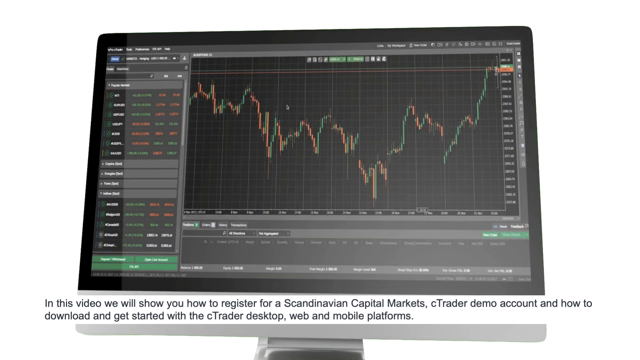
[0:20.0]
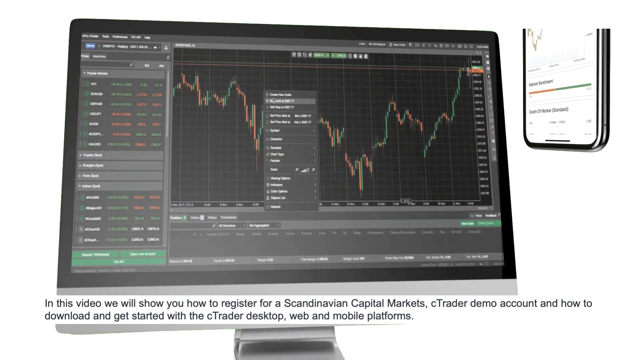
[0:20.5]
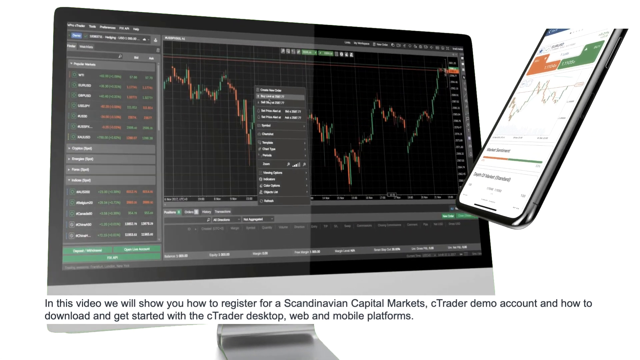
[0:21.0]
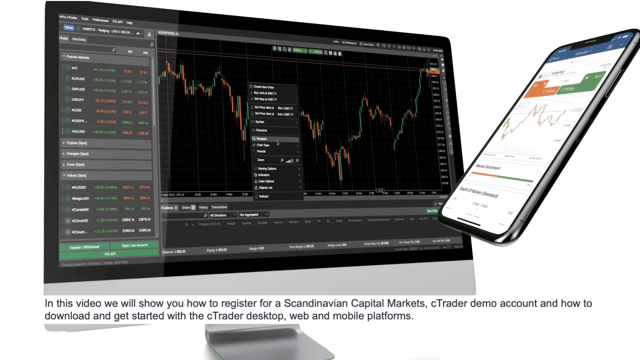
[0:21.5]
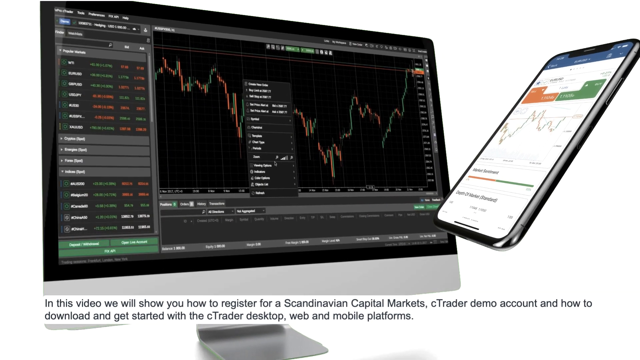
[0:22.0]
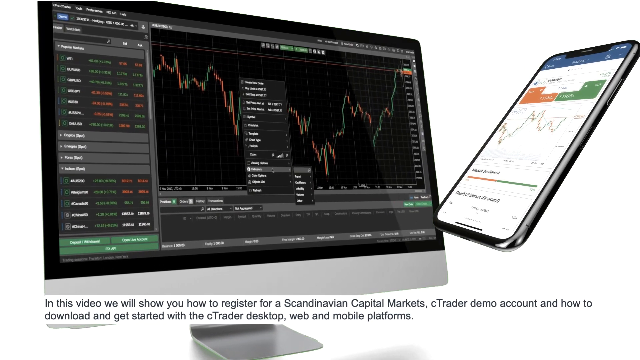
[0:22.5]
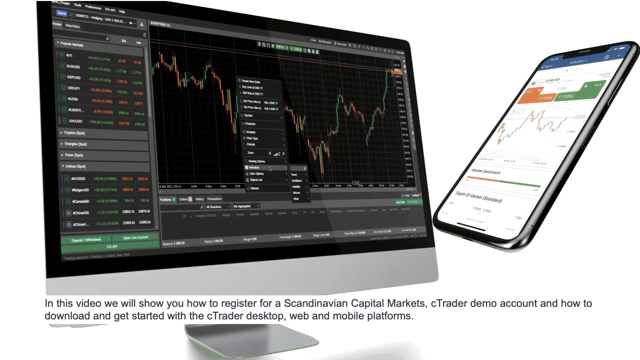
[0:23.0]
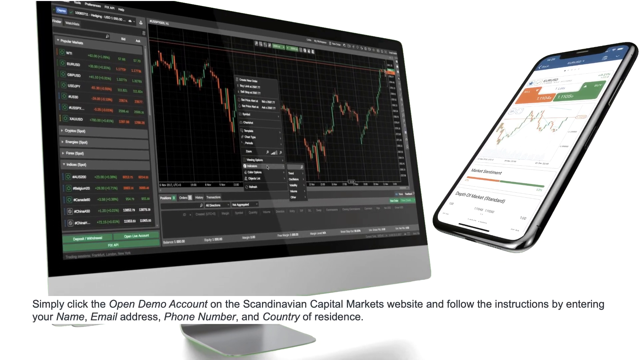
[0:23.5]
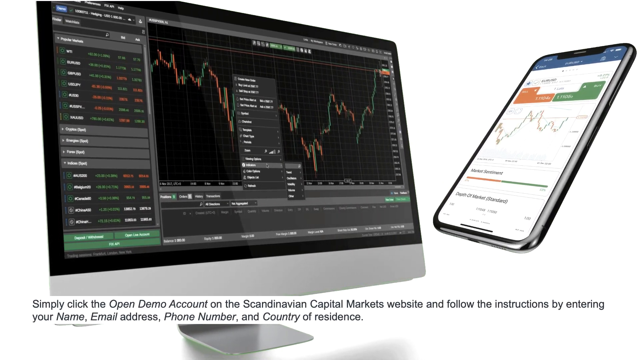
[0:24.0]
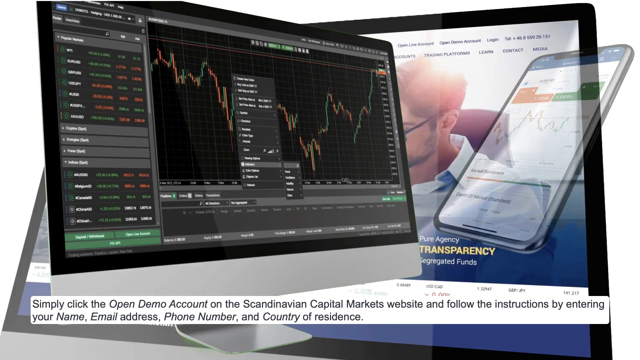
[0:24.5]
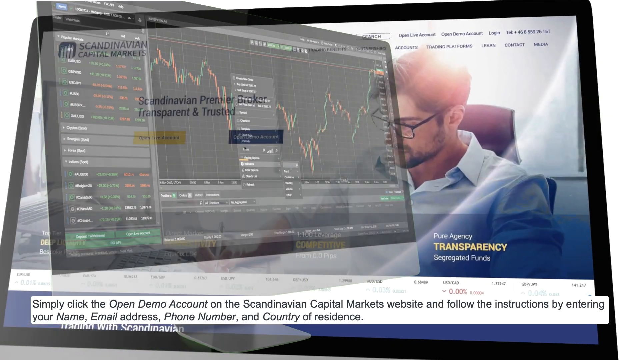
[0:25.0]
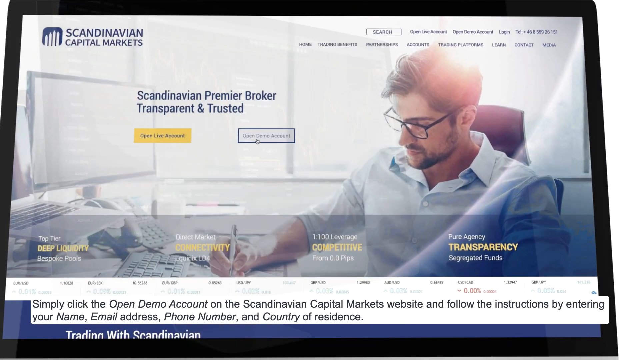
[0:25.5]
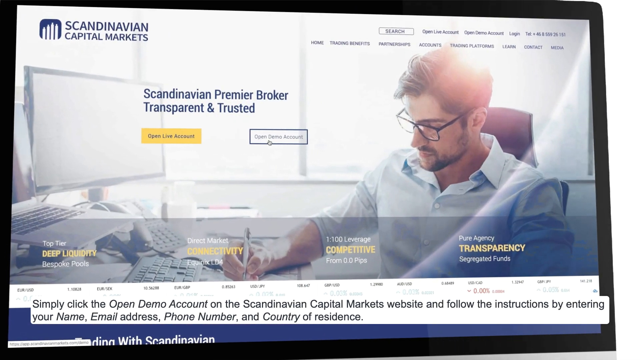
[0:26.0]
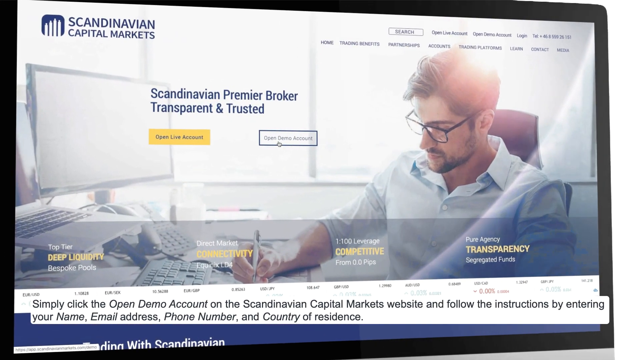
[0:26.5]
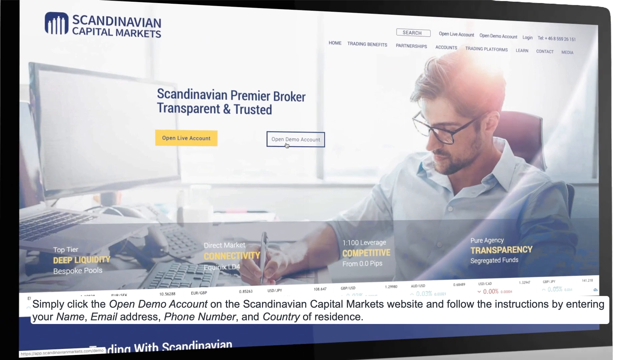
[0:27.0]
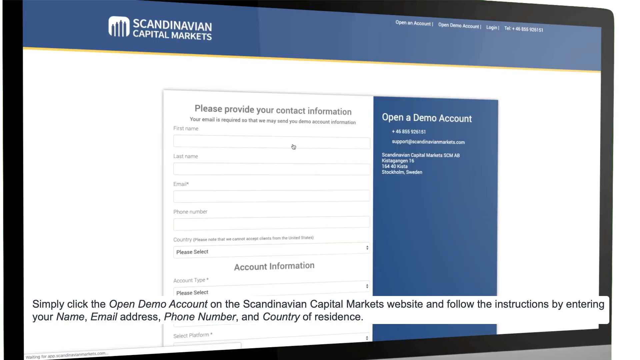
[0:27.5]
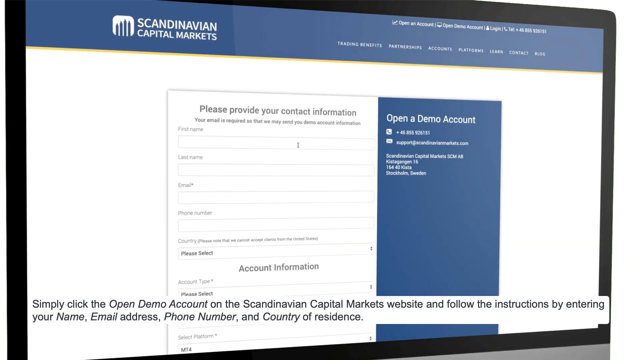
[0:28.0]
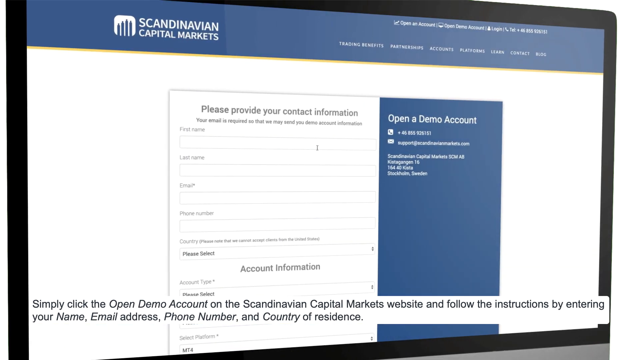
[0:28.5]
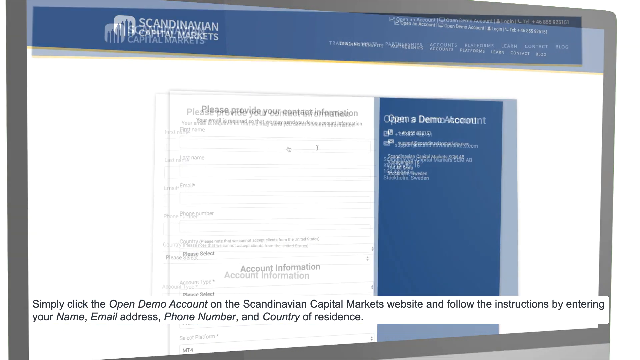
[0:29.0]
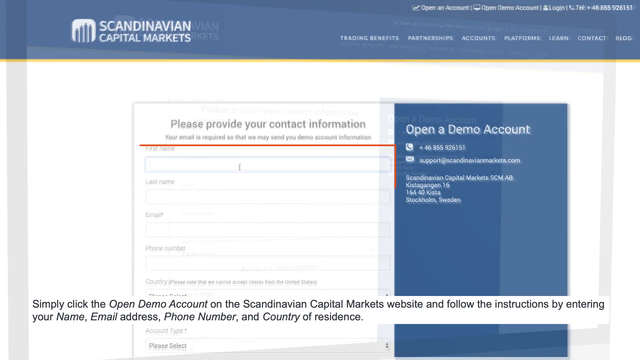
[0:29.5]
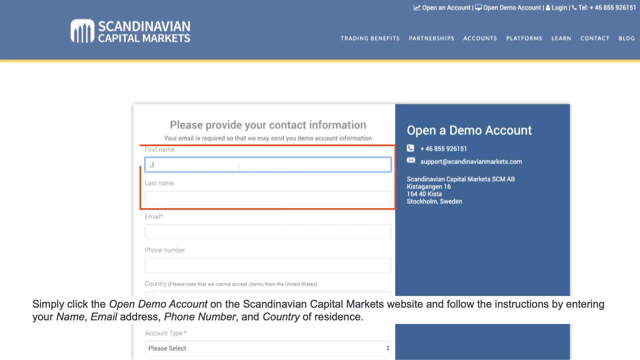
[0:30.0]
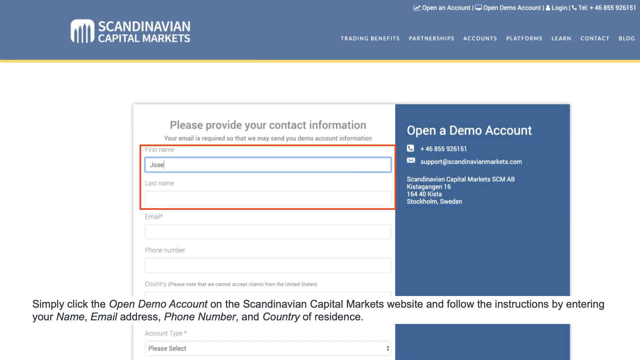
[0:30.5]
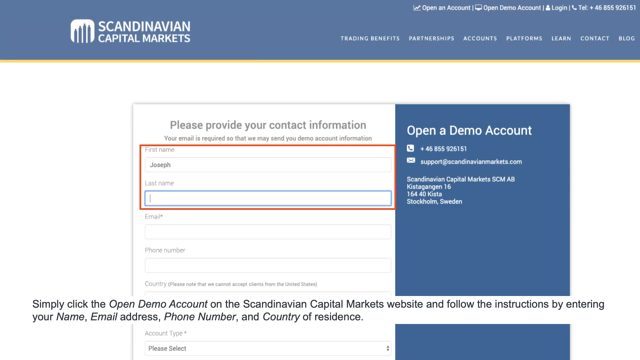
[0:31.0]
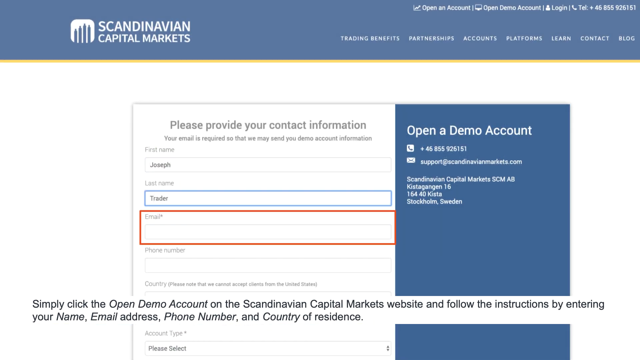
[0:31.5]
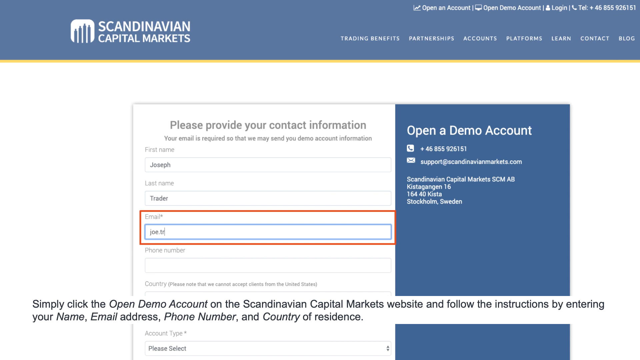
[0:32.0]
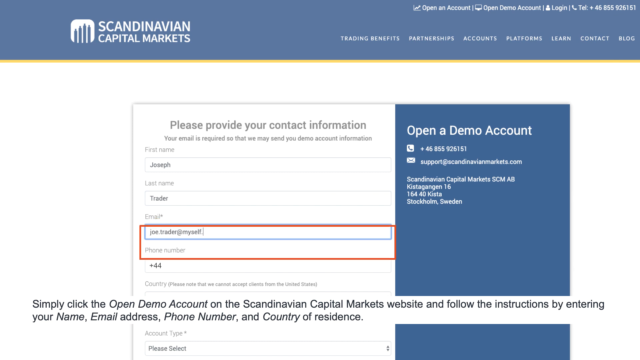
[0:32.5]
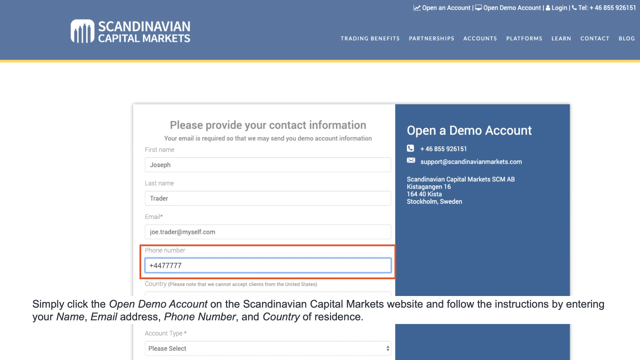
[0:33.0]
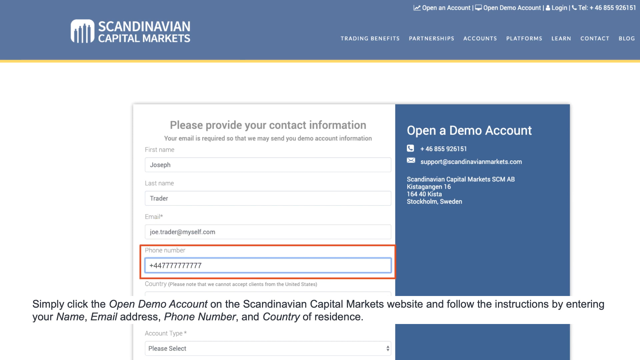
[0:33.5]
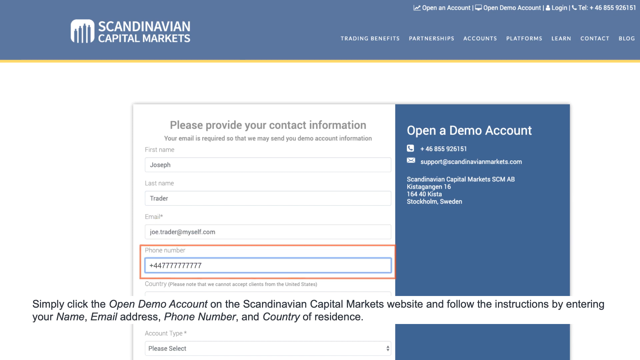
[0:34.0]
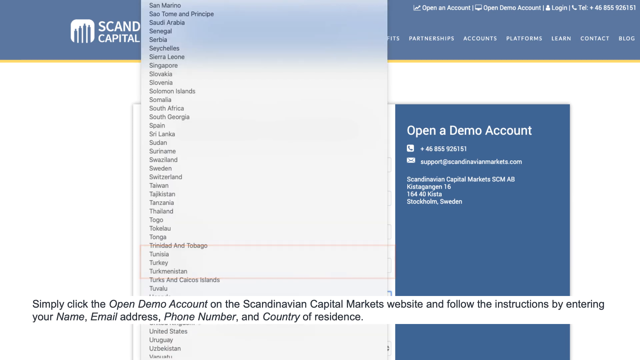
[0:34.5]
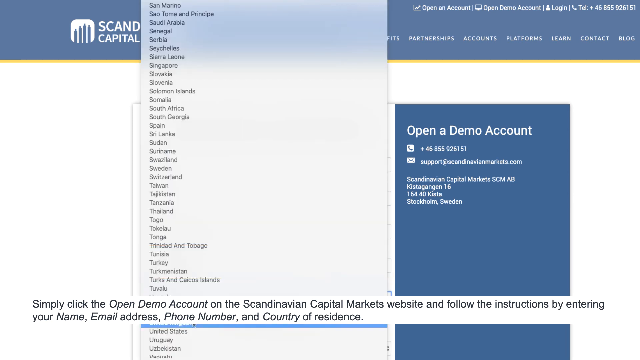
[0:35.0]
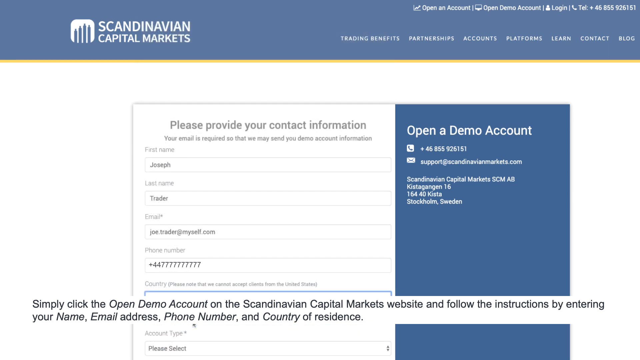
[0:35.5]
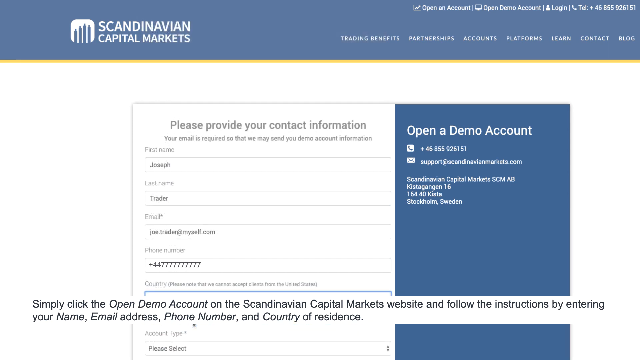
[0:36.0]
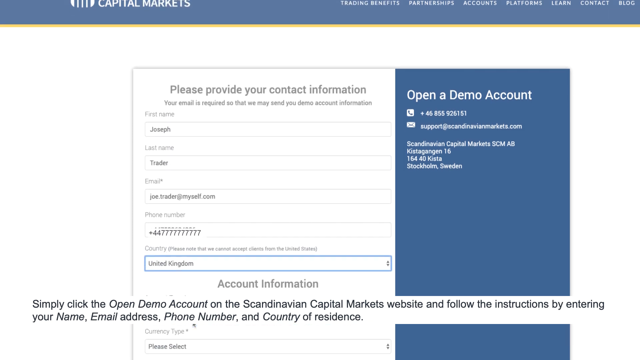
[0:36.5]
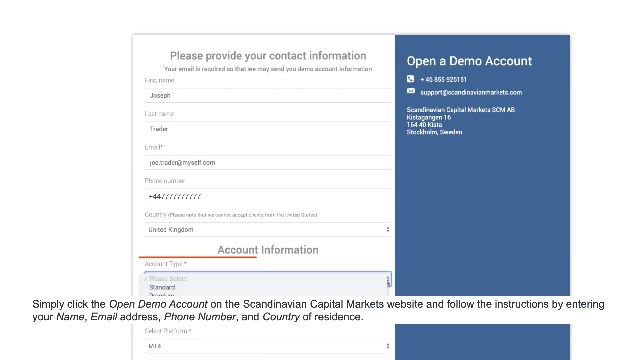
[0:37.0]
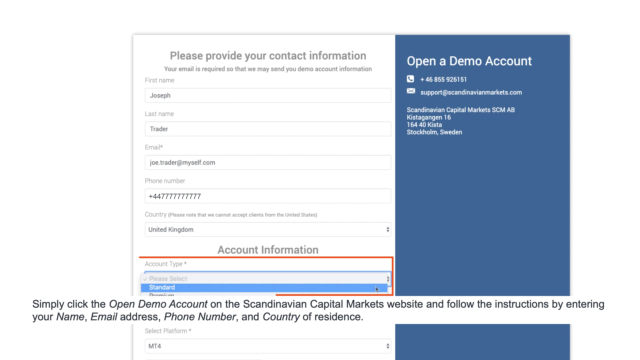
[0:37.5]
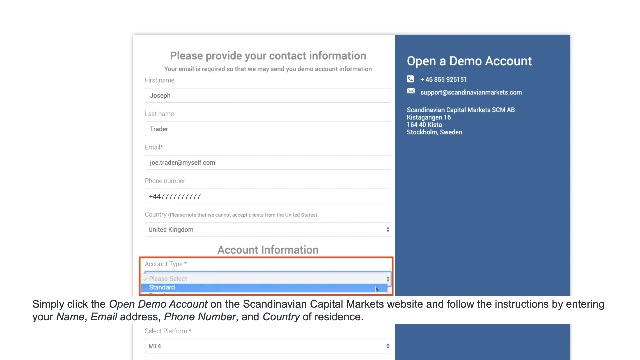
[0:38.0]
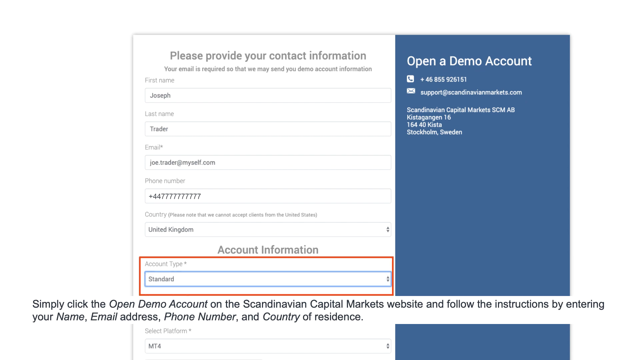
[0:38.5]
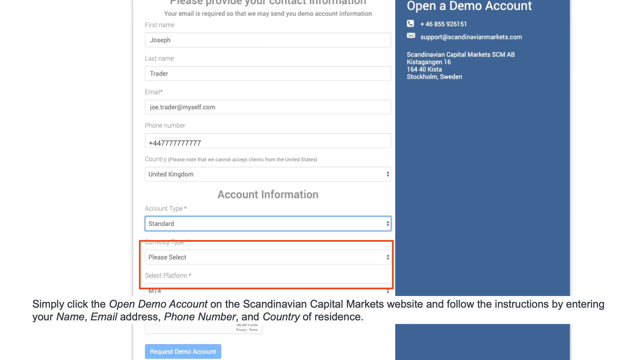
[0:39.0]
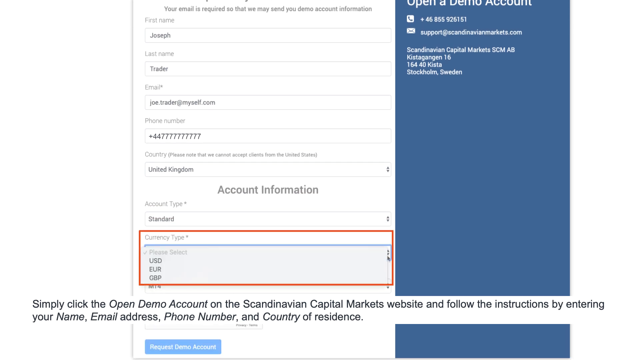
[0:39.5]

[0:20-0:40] From the stock trading screen, a cell phone pops into view on the right side of the screen, showing stat tracking. The video fades to the main page of the website, which features a man on the right side of the screen looking at stocks. It then fades to a sign-in page that says "Open Demo Account" on the right side, while the left side asks for contact information, with various fields for entering it. The video fades to the main page of the website once again. A red line highlights the fields for first and last name and other information, such as where the user lives and their email address. The page also offers choices for the currency and the type of account.